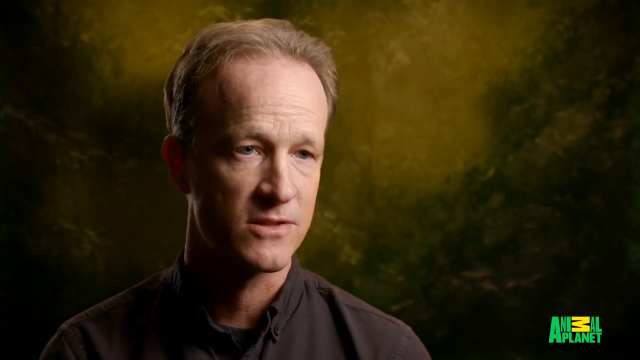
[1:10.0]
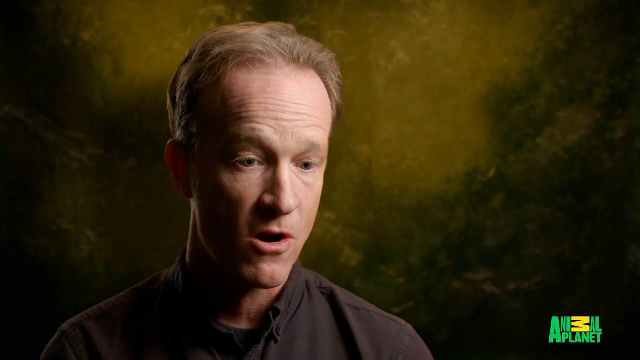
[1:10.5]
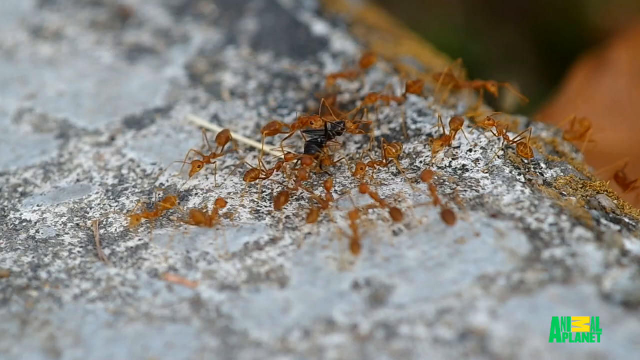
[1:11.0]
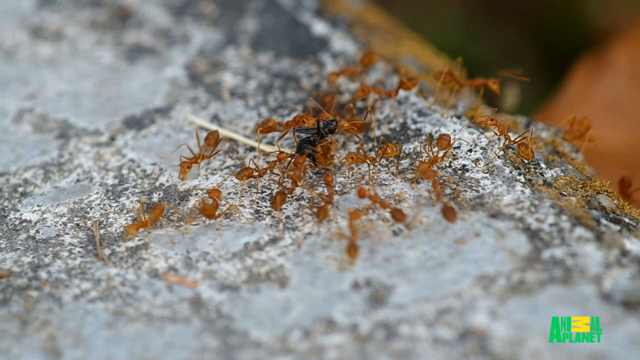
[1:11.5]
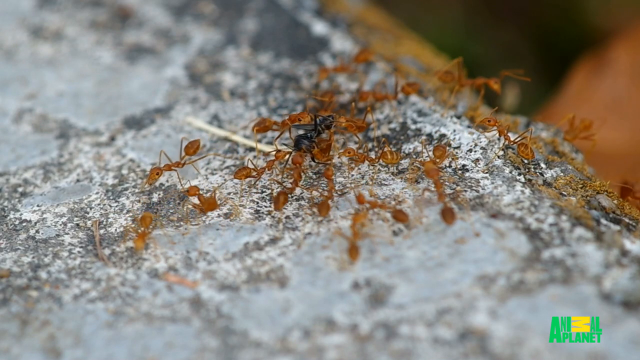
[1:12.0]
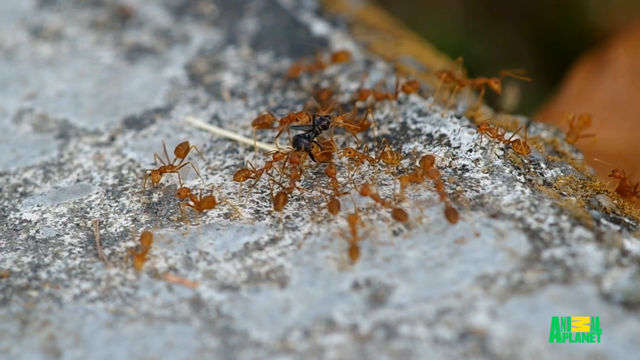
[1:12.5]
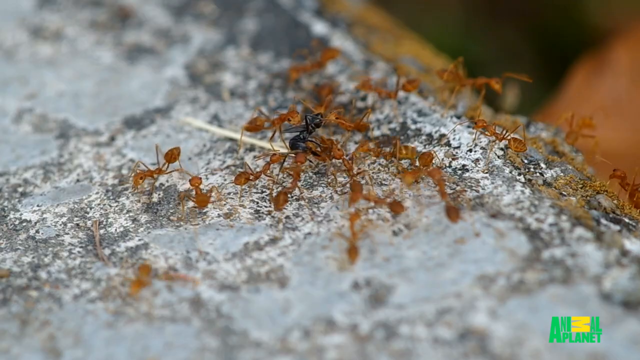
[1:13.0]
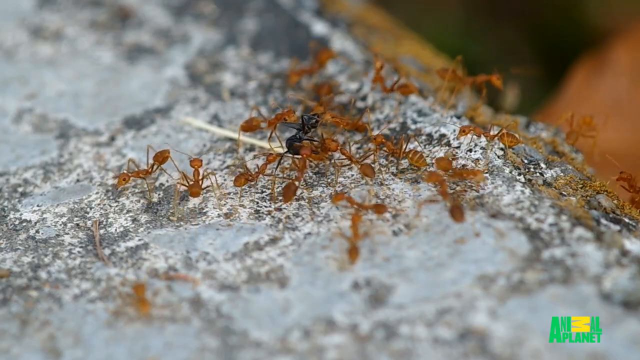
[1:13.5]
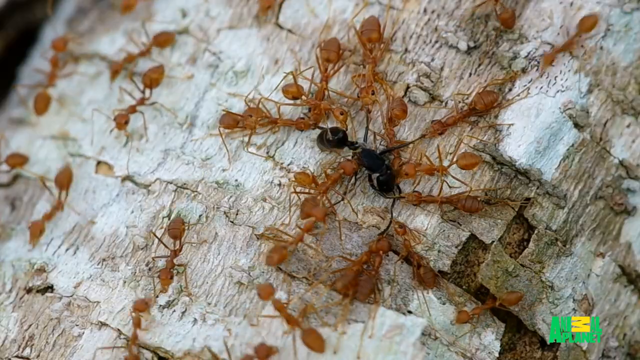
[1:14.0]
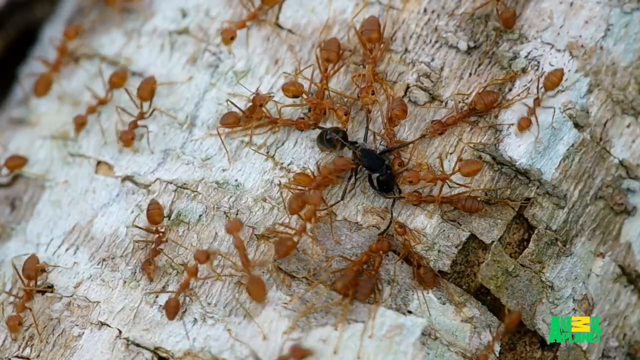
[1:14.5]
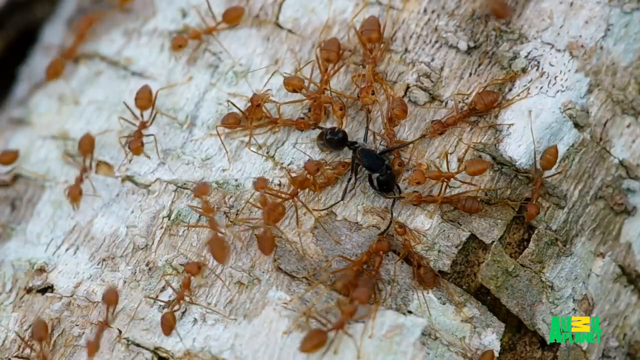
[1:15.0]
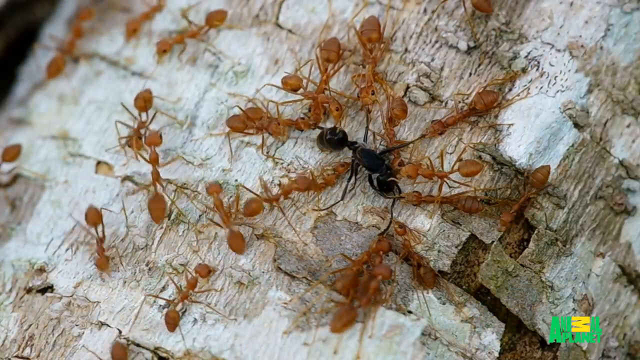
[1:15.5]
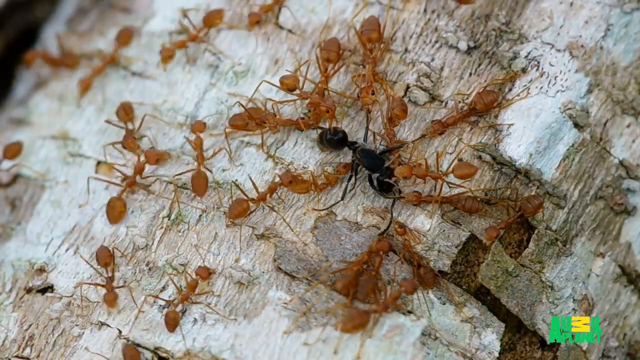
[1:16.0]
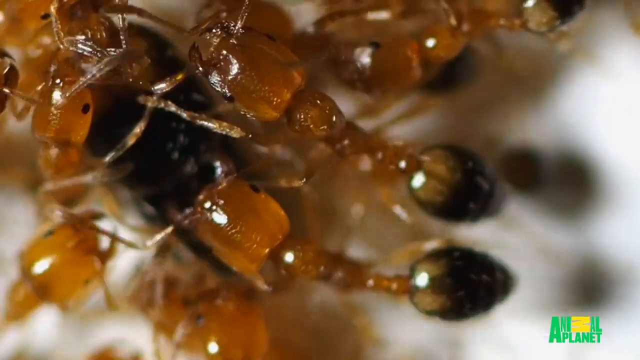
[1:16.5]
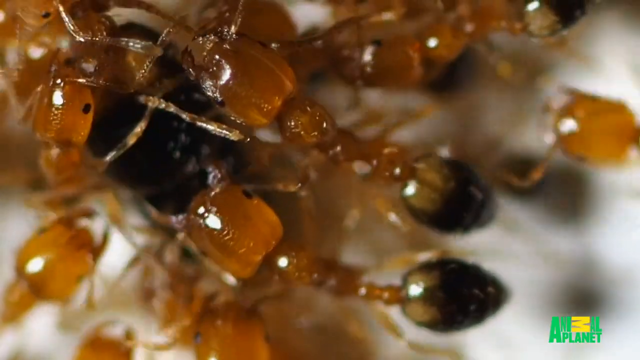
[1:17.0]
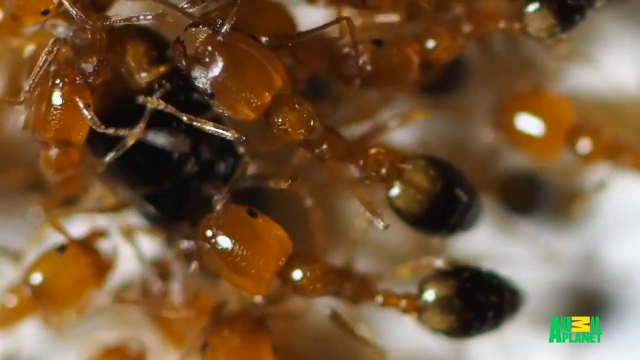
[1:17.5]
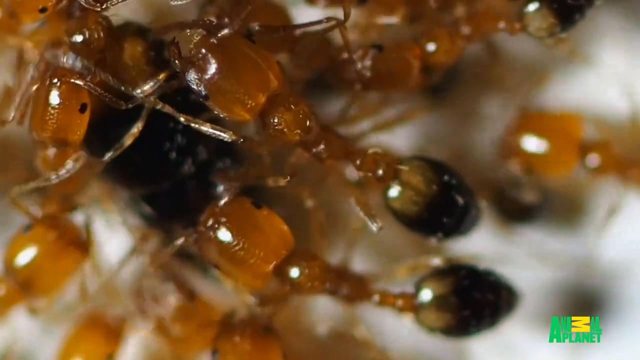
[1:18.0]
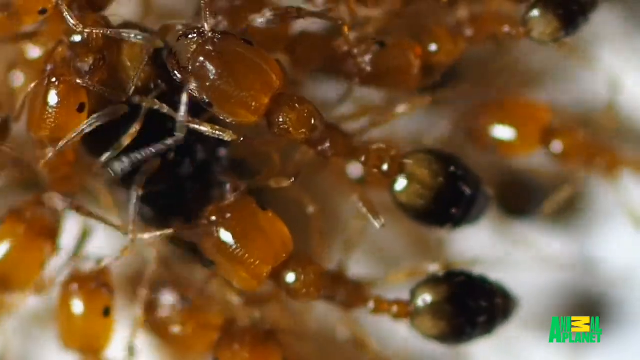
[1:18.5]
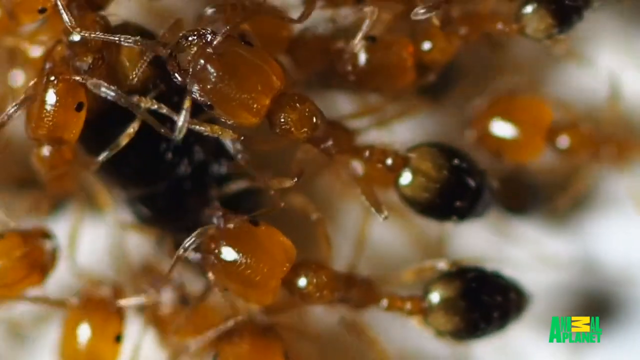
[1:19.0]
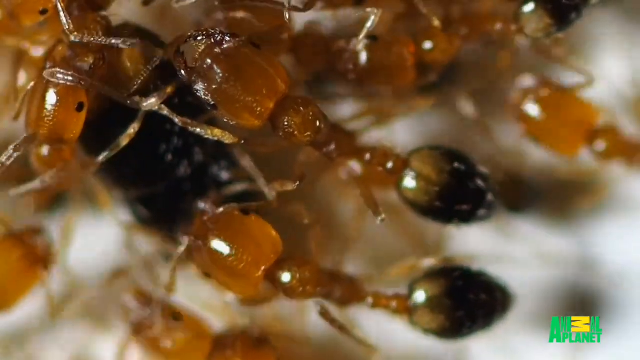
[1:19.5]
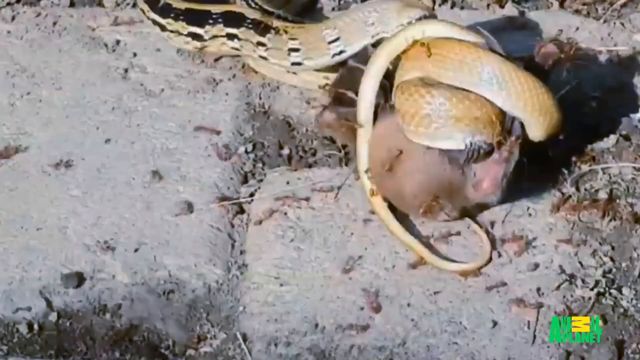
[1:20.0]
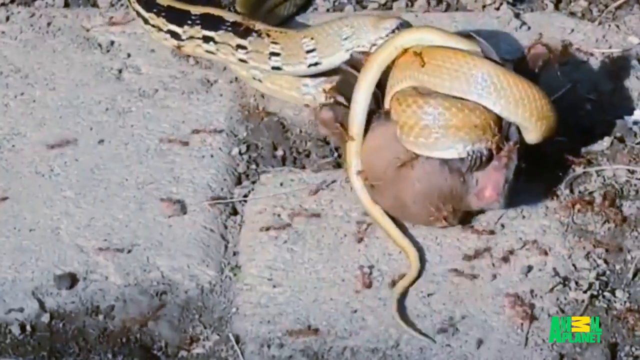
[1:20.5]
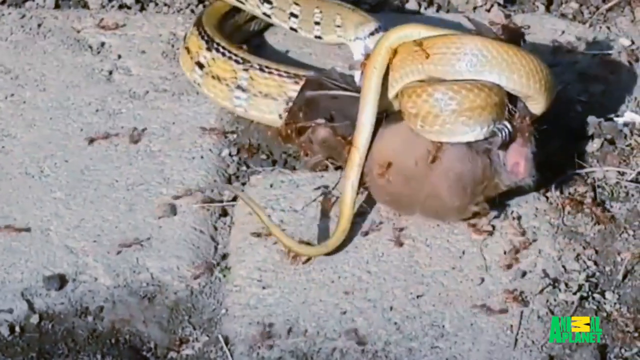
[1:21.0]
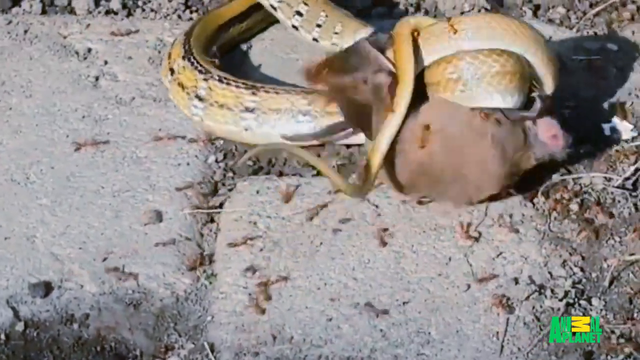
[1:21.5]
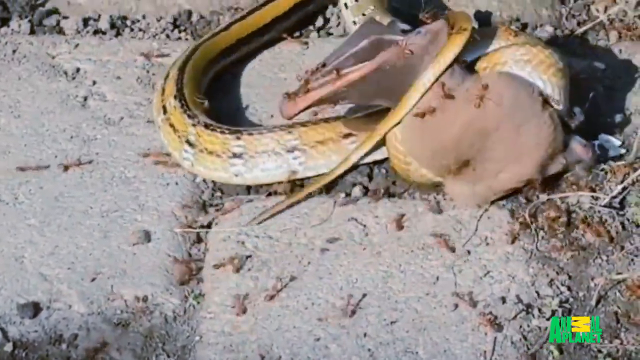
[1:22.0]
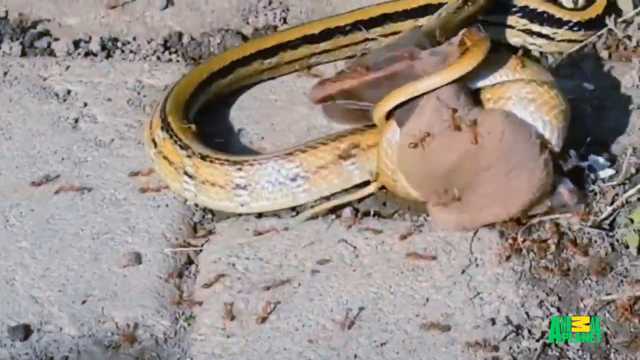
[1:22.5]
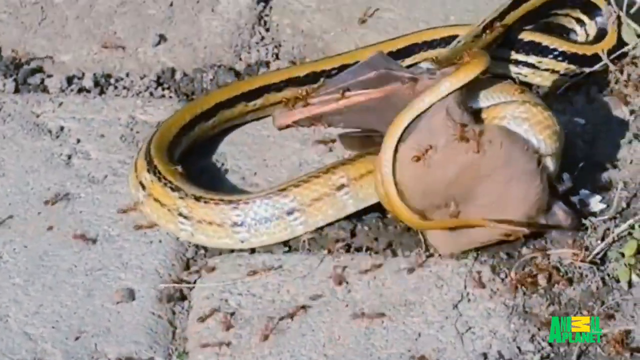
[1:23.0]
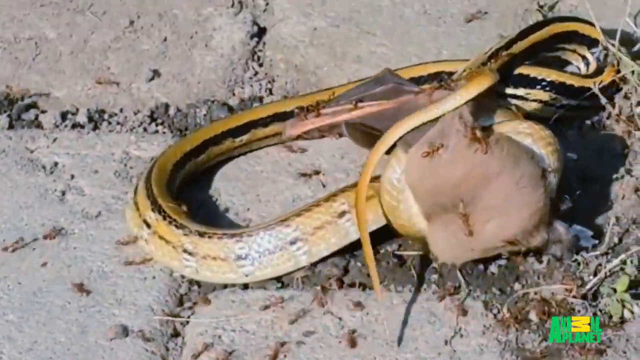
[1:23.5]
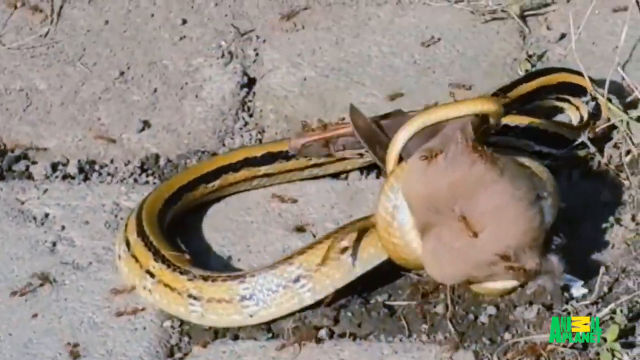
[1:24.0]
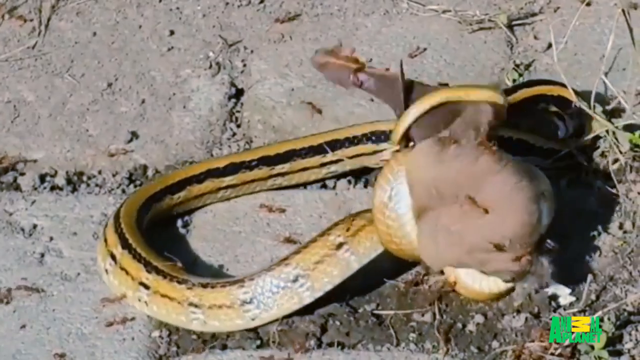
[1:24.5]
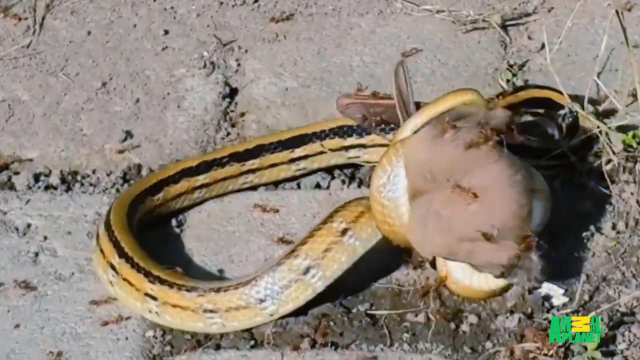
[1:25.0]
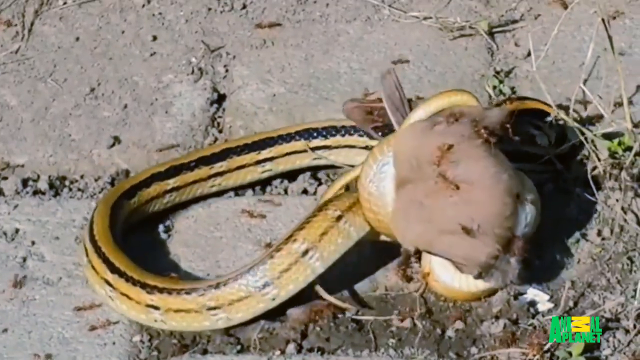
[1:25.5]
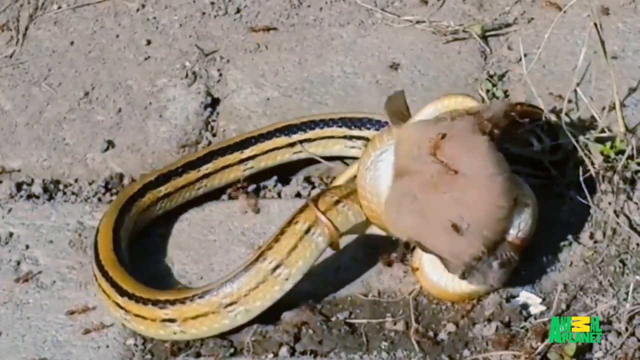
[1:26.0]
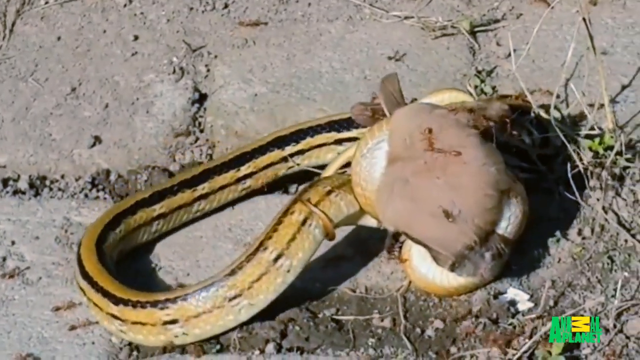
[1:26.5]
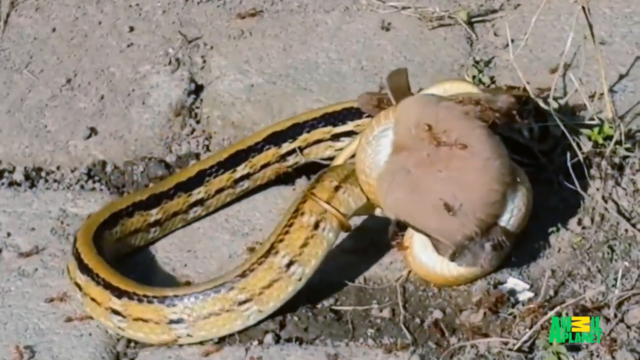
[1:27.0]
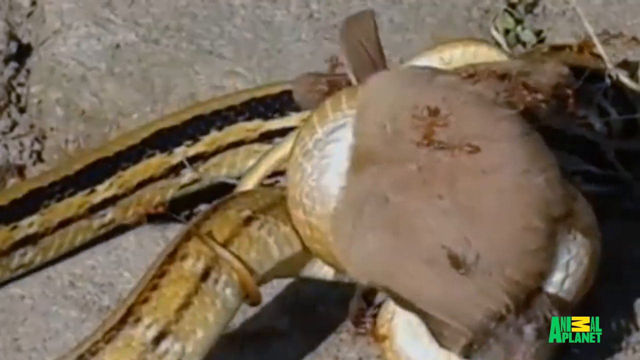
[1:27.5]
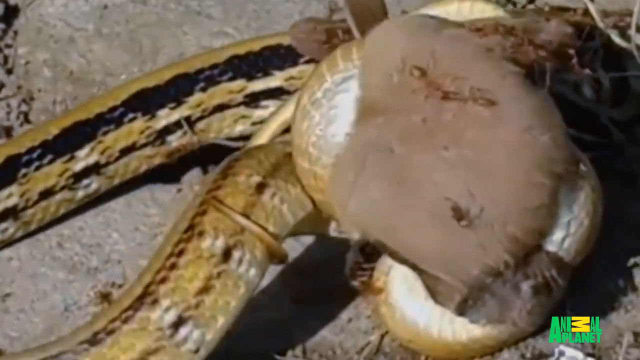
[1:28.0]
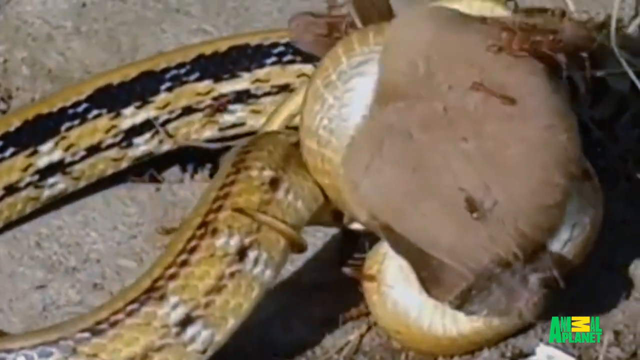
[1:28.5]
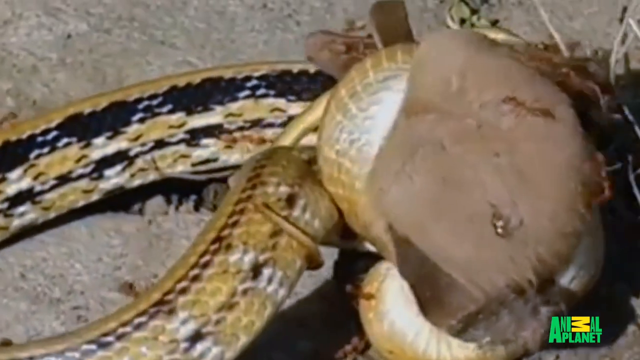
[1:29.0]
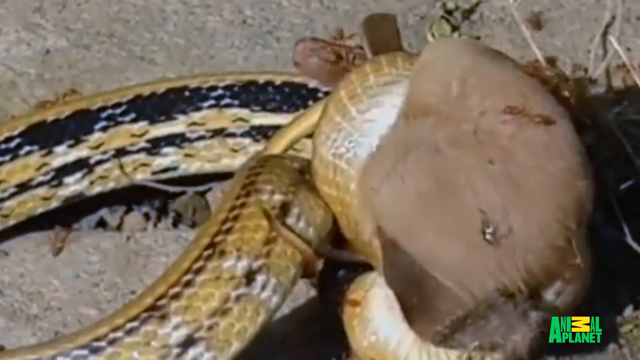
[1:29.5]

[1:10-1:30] The man doing the commentary wears a brown shirt, is middle-aged, and appears to be white. He has sandy blonde, thinning, short to medium length hair. He is in a professional setting and appears to be against a dark brown and black backdrop. The video switches back and forth between him and a pile of several tan to honey-colored ants piled up around a single black ant, appearing to be killing it. This is on Animal Planet.